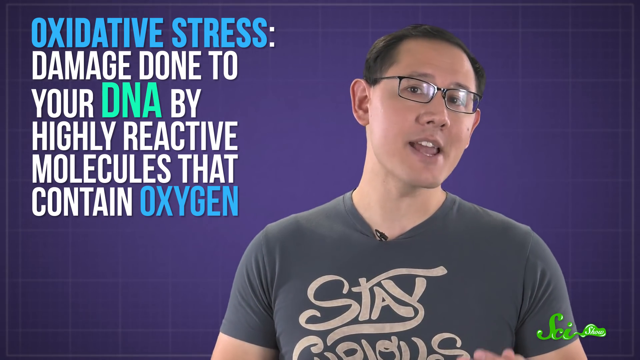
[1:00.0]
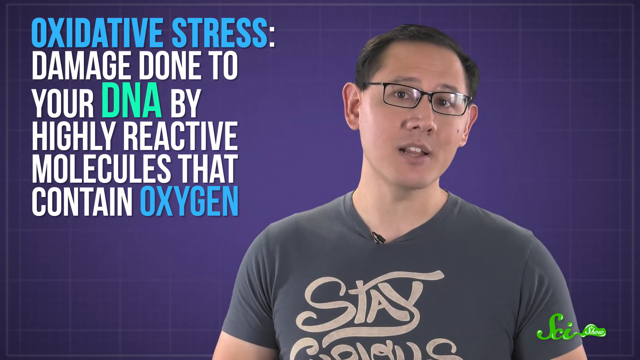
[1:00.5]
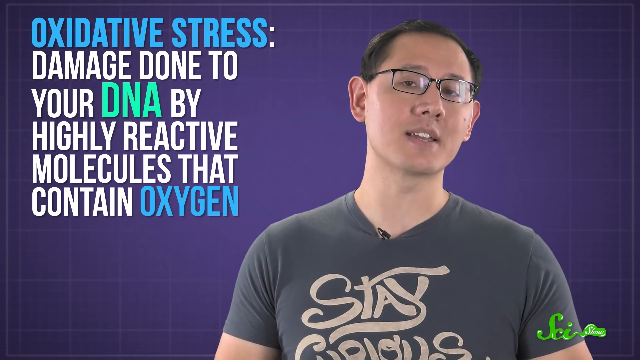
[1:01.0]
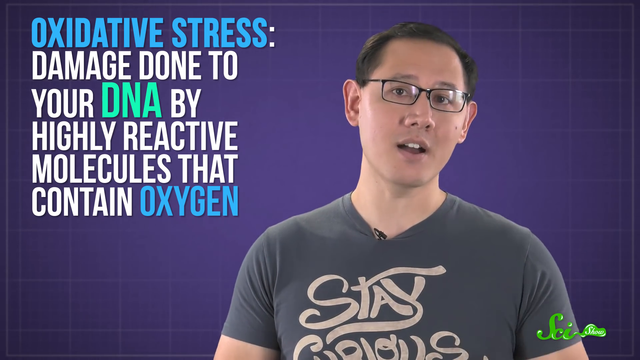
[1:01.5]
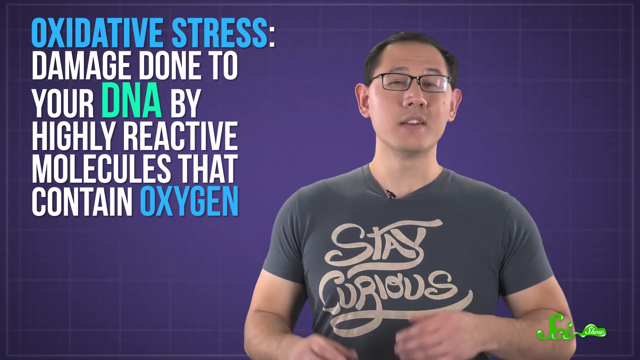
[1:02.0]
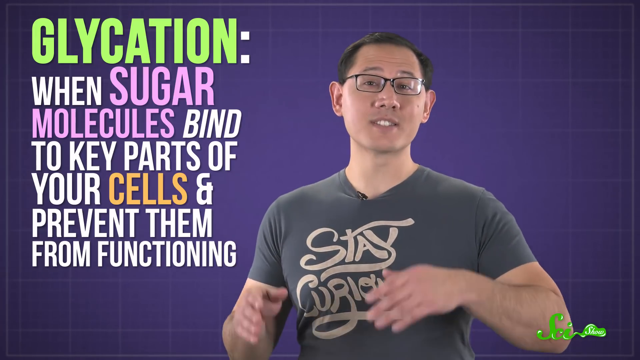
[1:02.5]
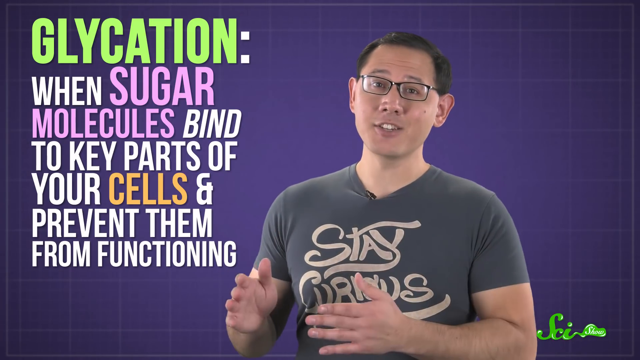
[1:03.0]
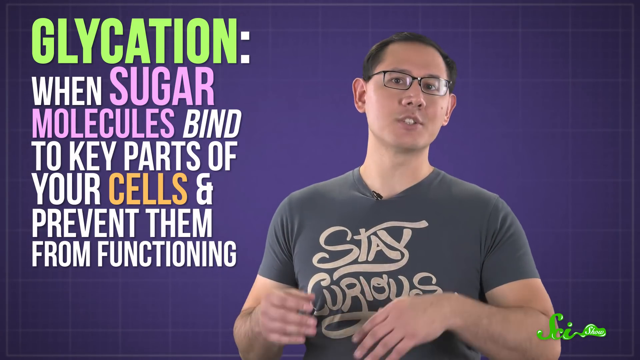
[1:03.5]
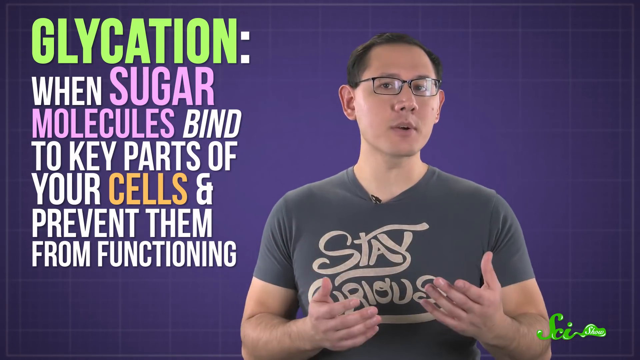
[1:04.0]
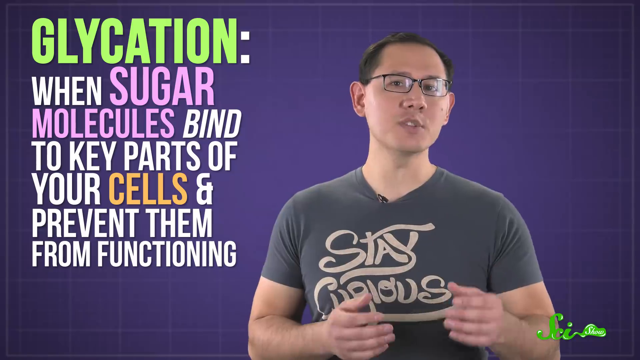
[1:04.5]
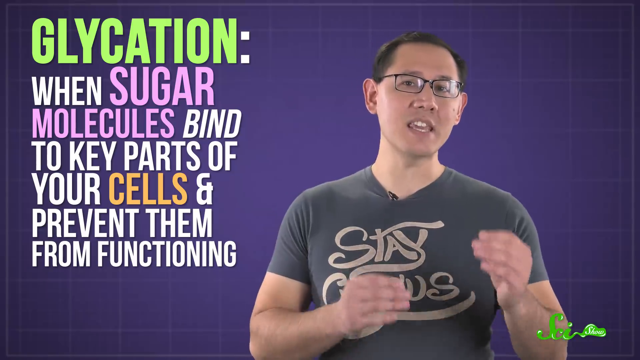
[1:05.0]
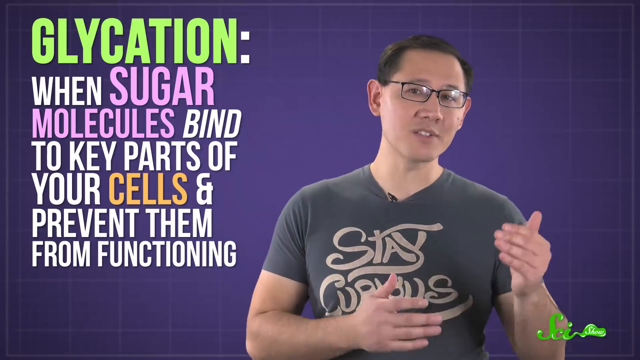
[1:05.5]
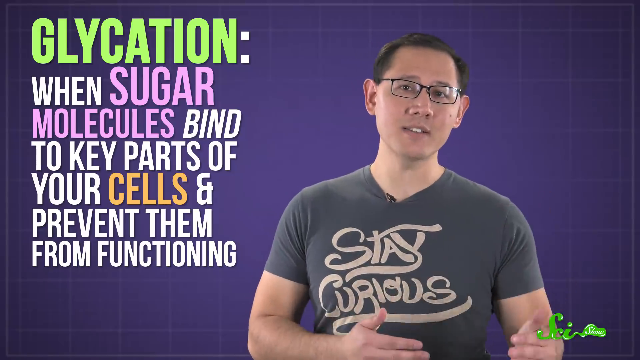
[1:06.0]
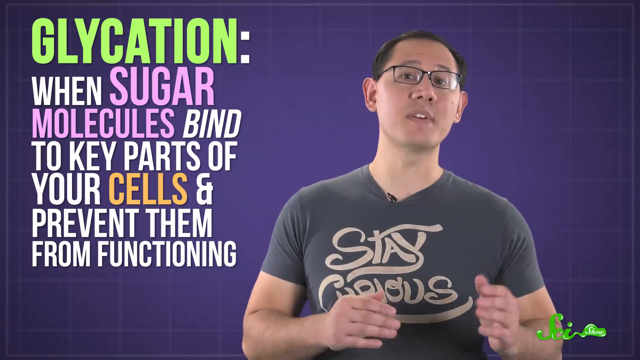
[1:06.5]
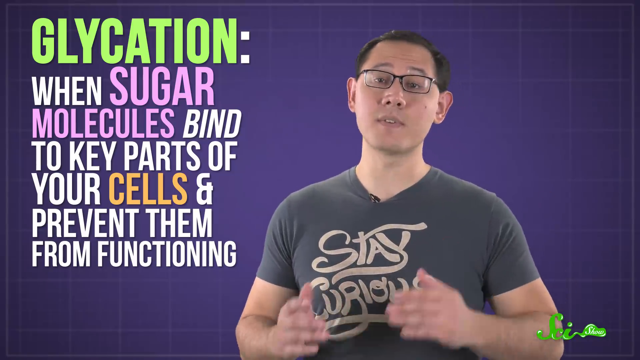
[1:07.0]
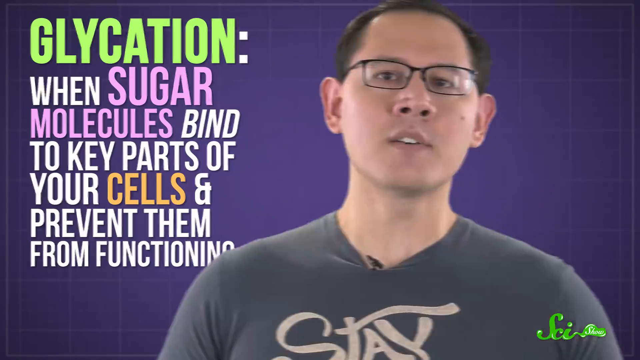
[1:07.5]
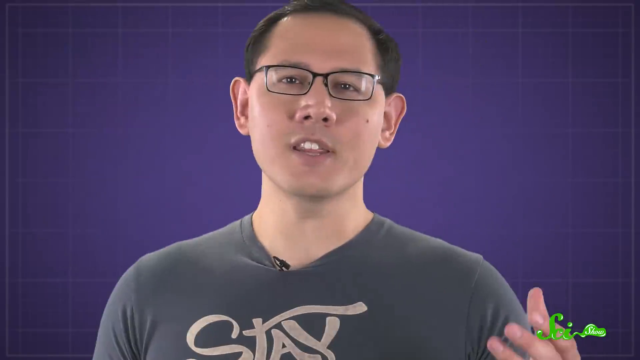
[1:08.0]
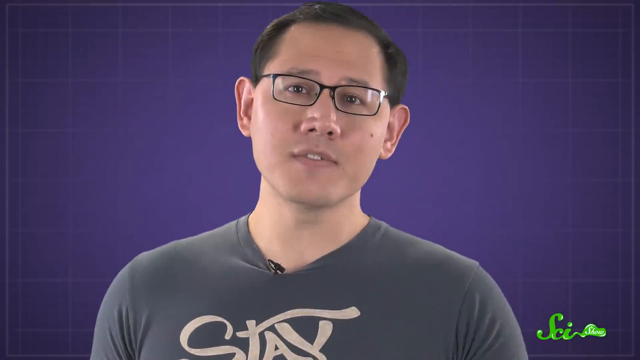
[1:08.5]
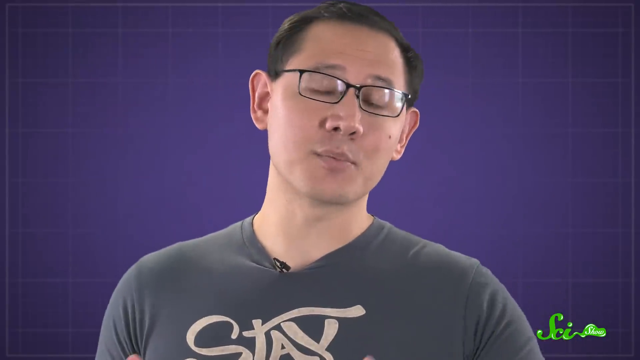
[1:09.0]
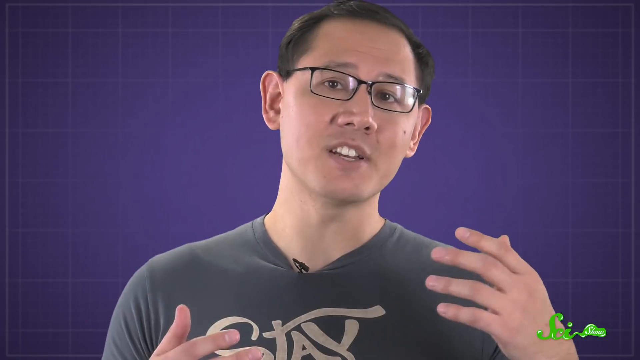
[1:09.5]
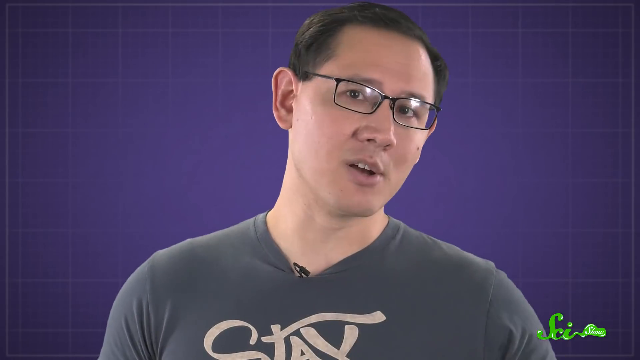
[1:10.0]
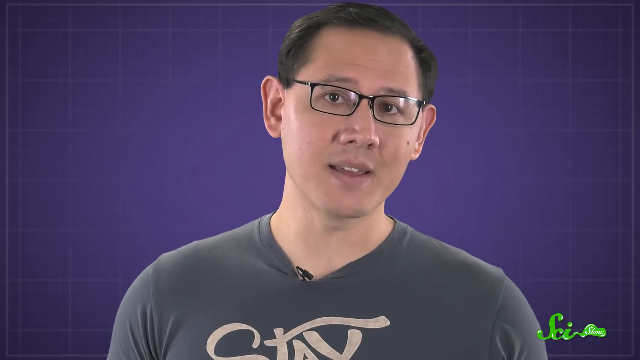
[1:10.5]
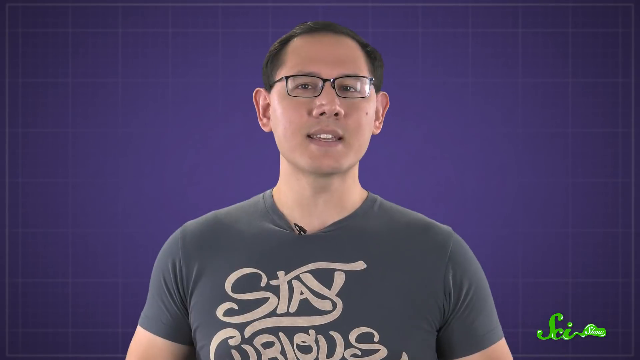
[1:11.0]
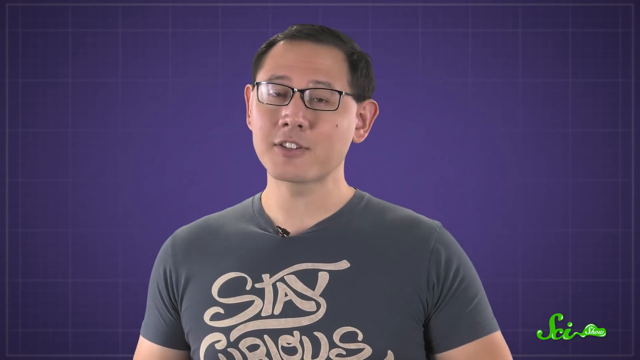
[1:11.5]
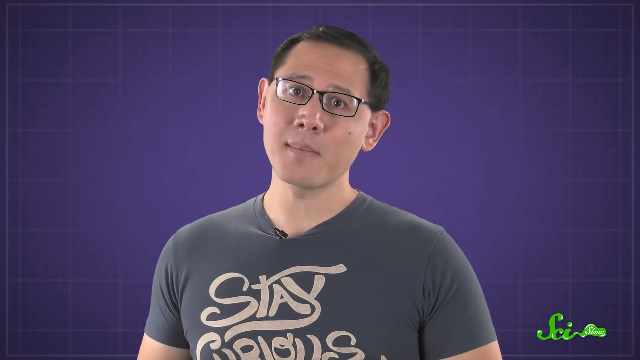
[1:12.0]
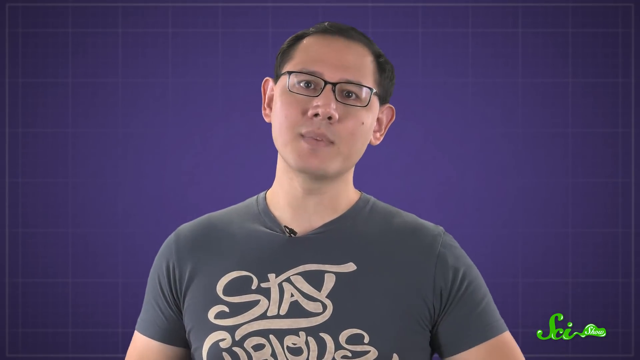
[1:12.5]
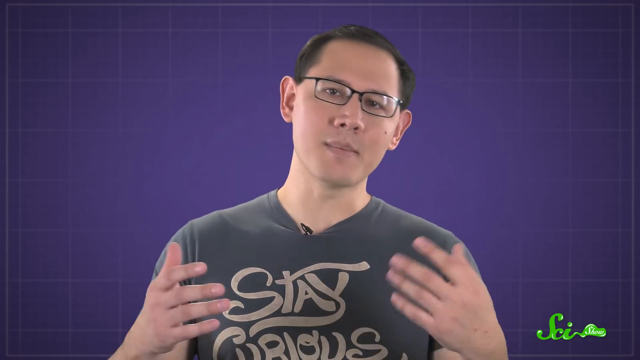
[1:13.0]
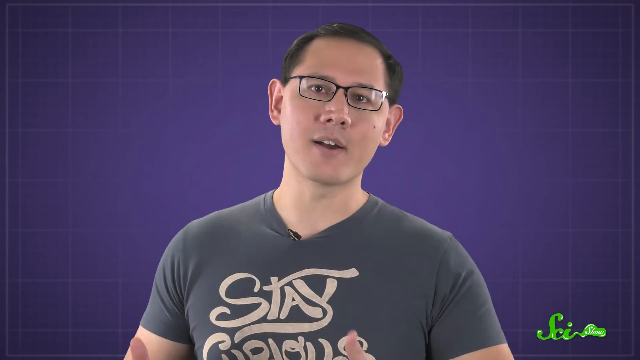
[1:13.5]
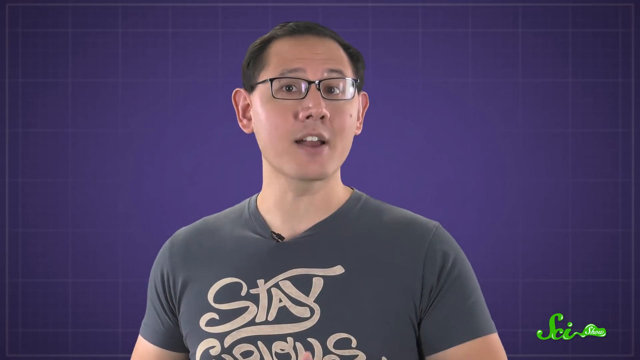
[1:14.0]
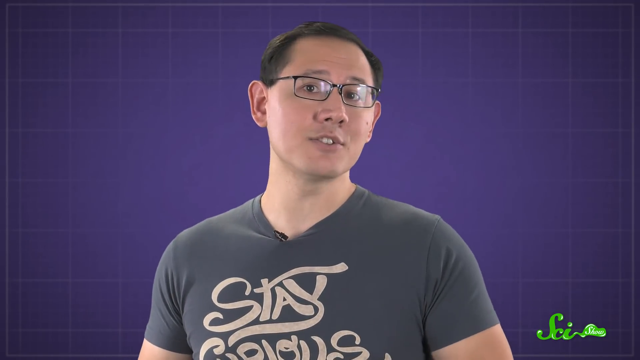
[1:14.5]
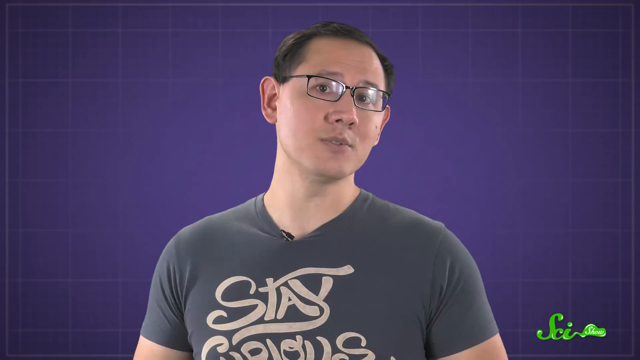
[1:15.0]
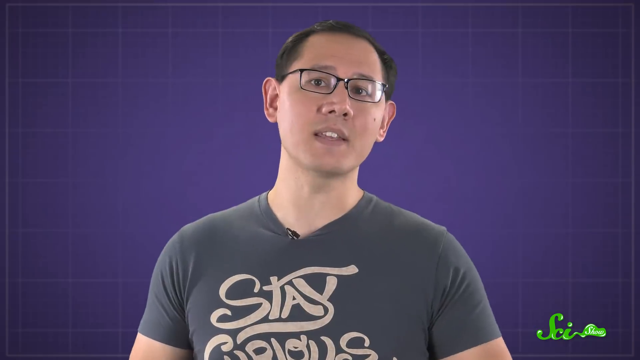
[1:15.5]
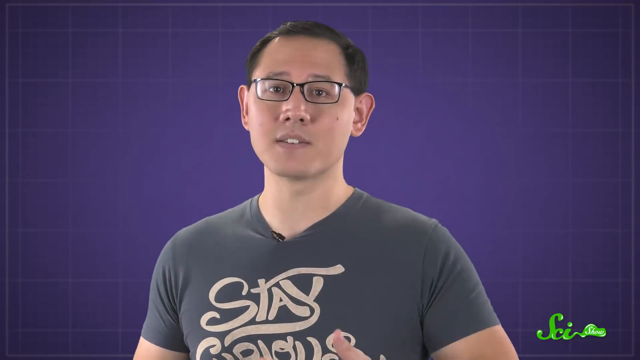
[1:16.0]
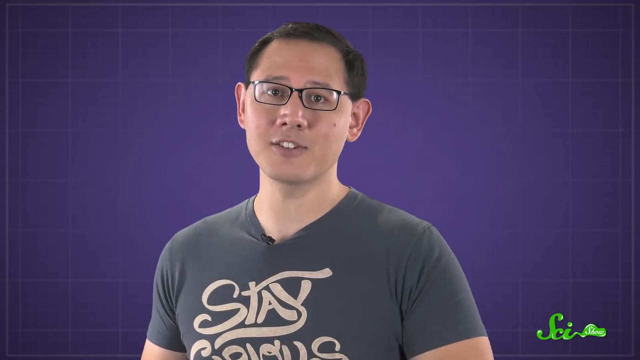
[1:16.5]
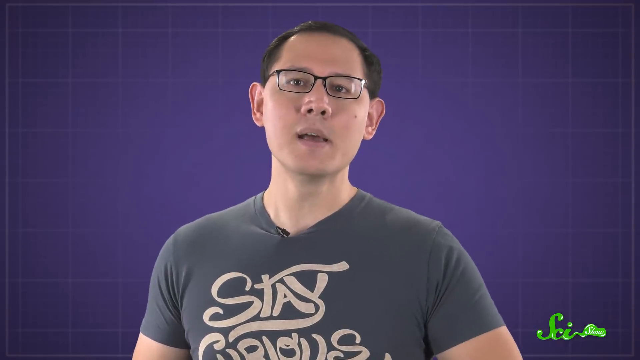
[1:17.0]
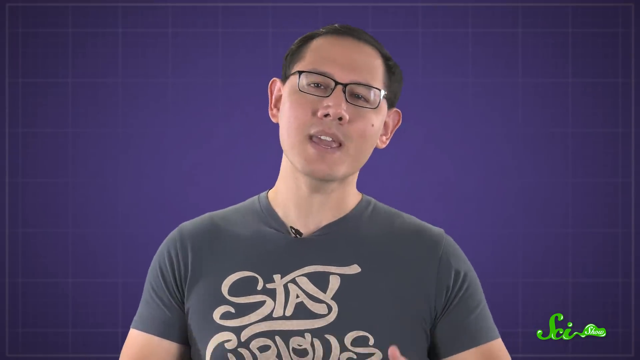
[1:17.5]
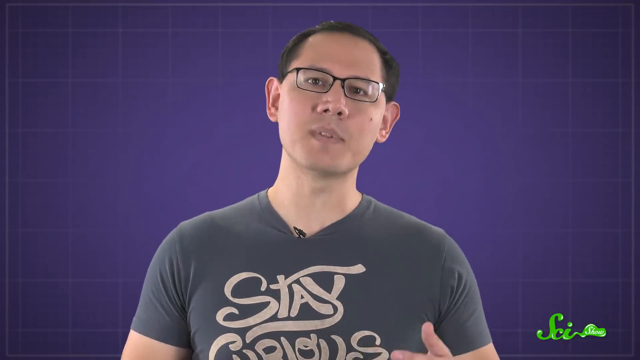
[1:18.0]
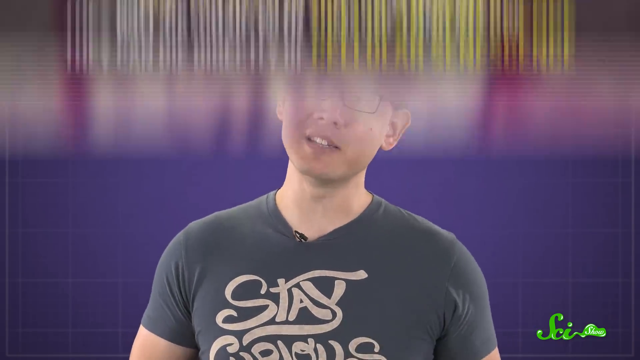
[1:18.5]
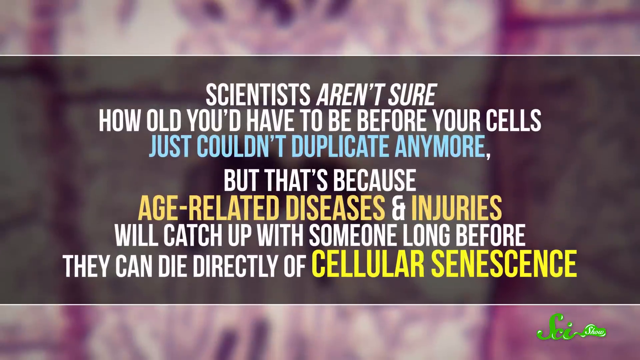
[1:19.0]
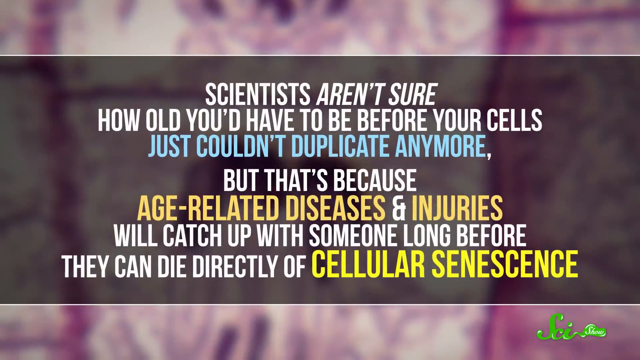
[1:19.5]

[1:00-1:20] Words appear in the upper left corner of the screen in light blue, white and bright green font against a purple background. A man talks to the camera; he has short black hair, black-framed glasses, a black microphone pinned to the collar of his t-shirt, and the words "stay curious" on his t-shirt. The text in the upper left reads "oxidative stress damage done to your DNA by highly reactive molecules that contain oxygen. Glycation, when sugar molecules bind to key parts of your cells and prevent them from functioning." The man continues talking to the camera and gestures with his hands, appearing engaged. Next, words appear reading "scientists aren't sure how old you'd have to be before your cells just couldn't duplicate anymore but that's because age-related diseases and injuries will catch up with someone long before".